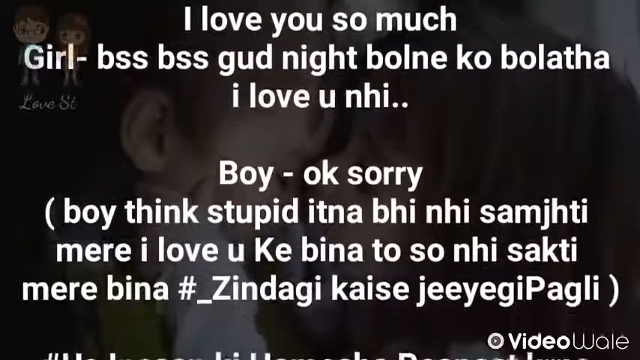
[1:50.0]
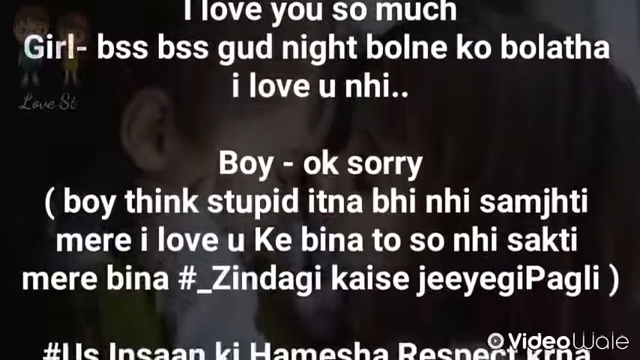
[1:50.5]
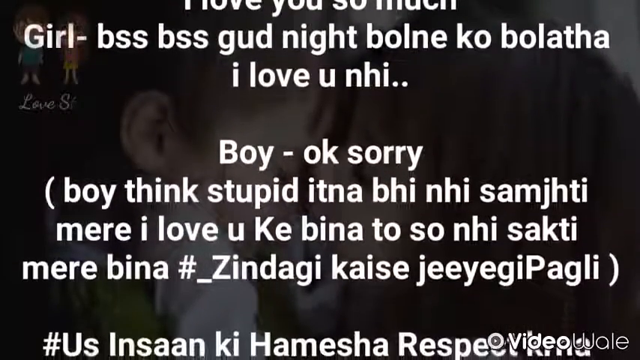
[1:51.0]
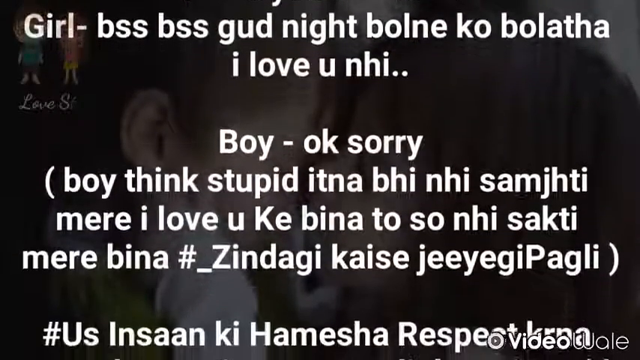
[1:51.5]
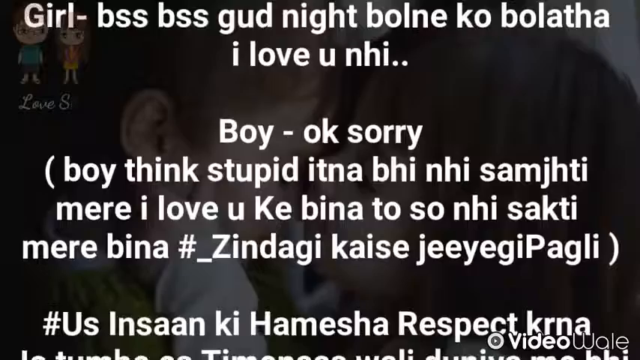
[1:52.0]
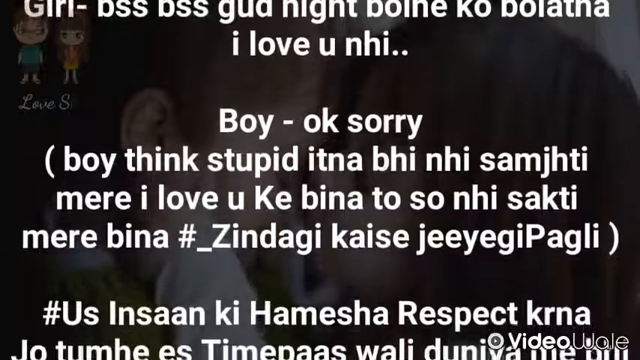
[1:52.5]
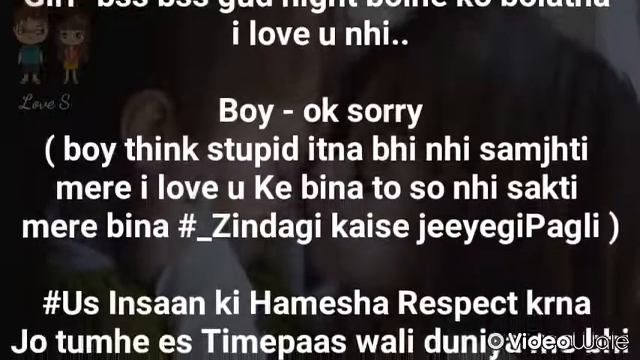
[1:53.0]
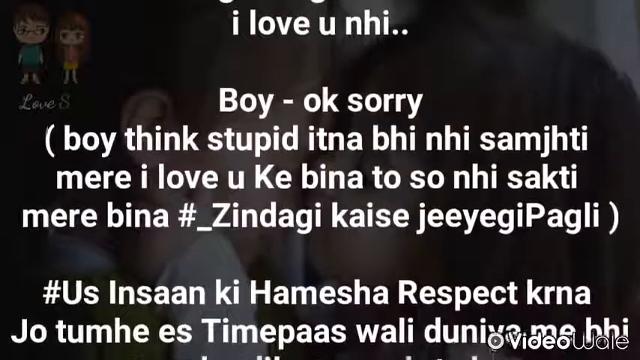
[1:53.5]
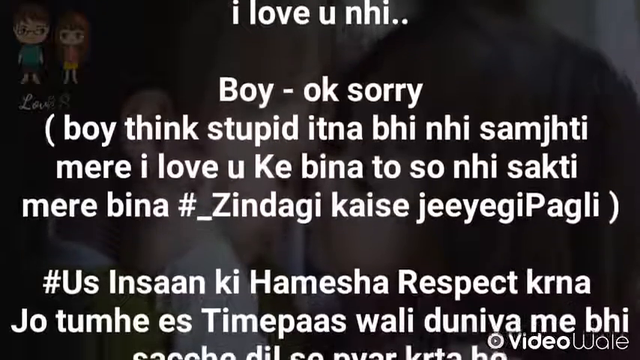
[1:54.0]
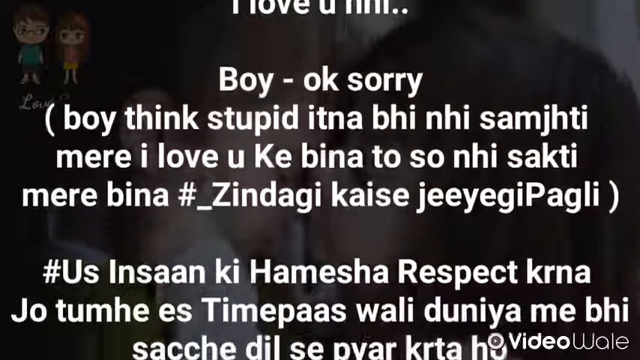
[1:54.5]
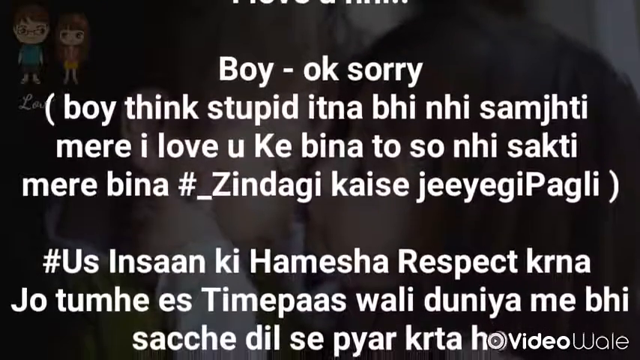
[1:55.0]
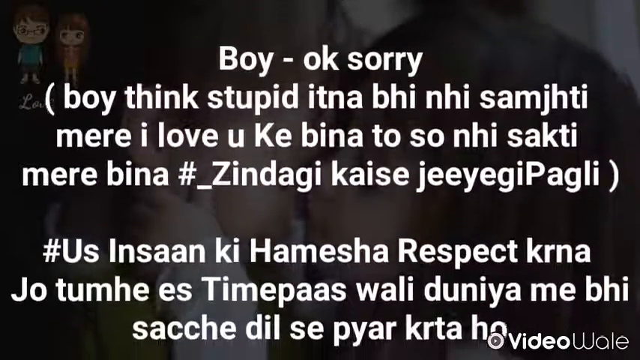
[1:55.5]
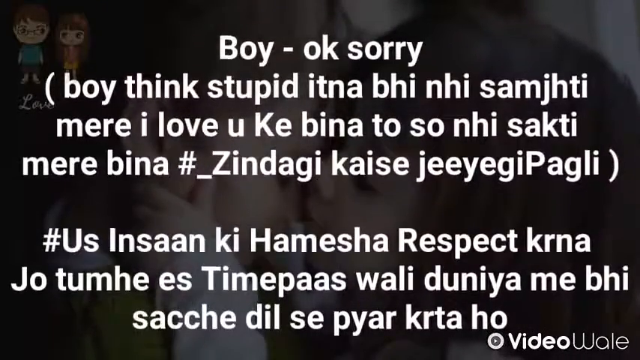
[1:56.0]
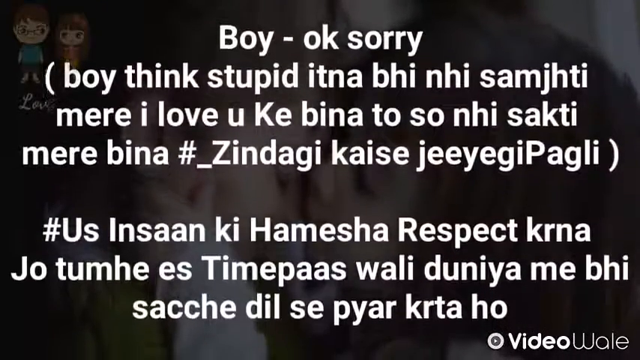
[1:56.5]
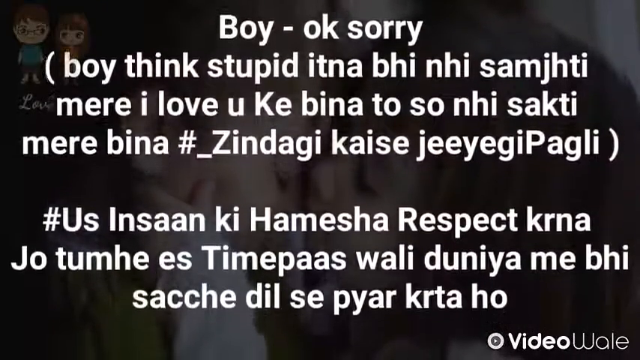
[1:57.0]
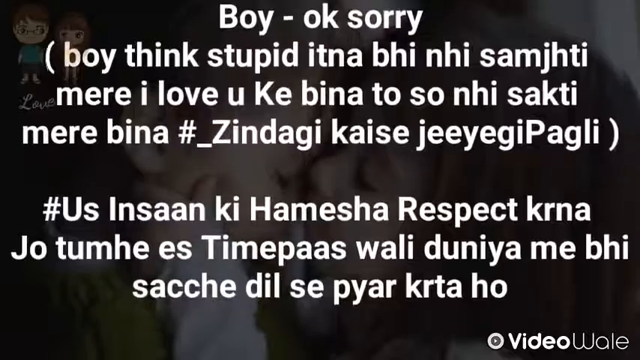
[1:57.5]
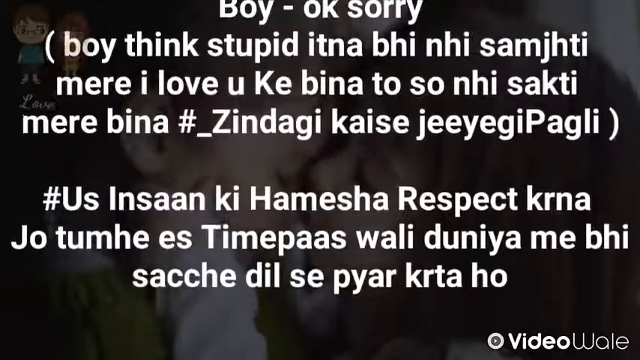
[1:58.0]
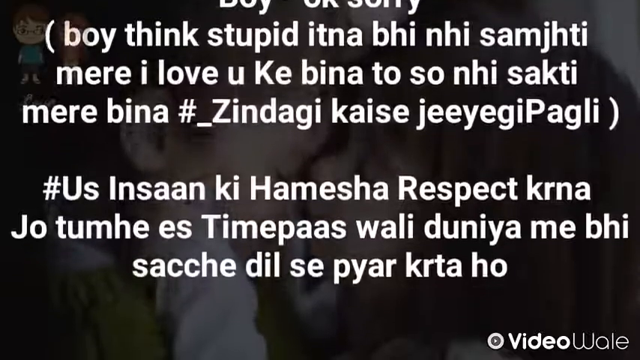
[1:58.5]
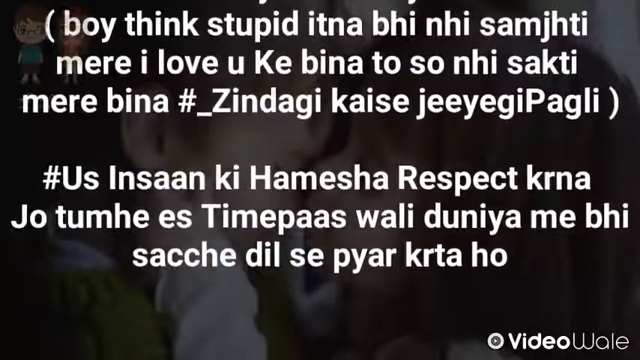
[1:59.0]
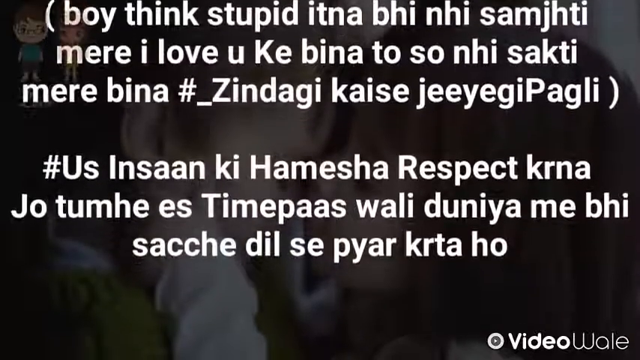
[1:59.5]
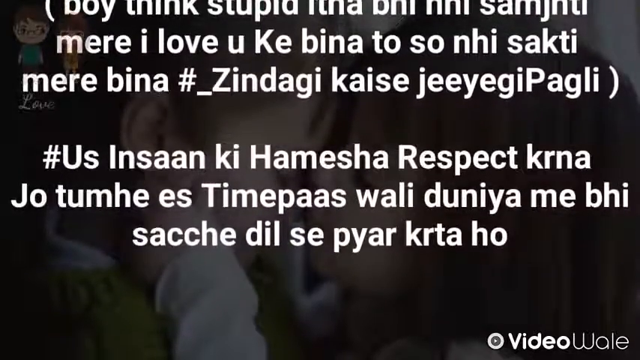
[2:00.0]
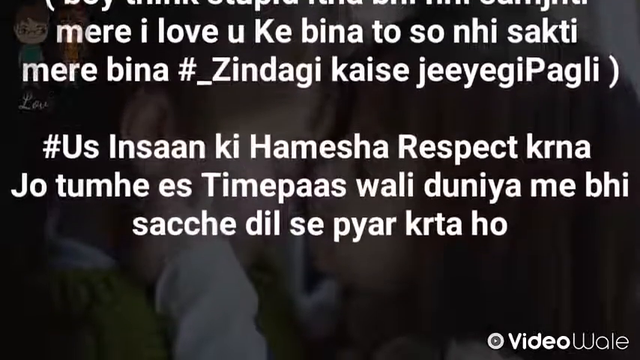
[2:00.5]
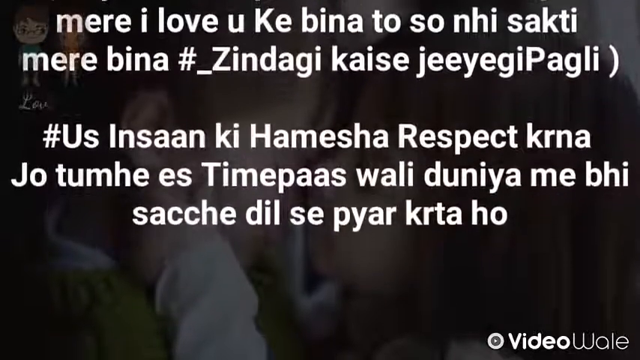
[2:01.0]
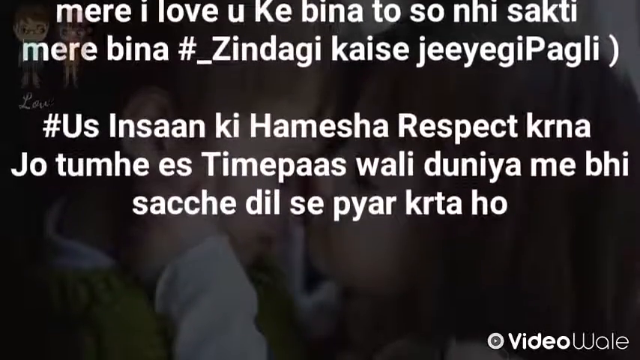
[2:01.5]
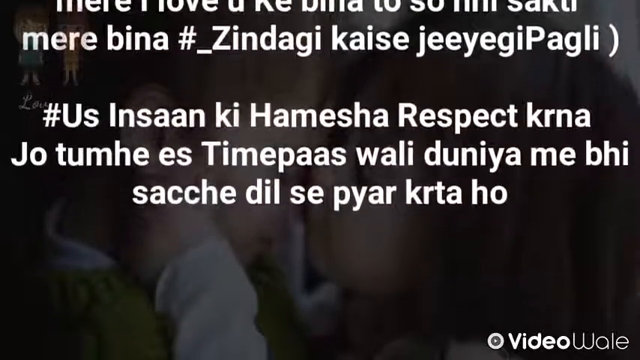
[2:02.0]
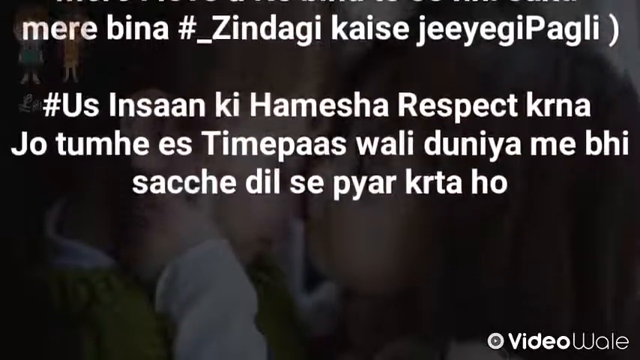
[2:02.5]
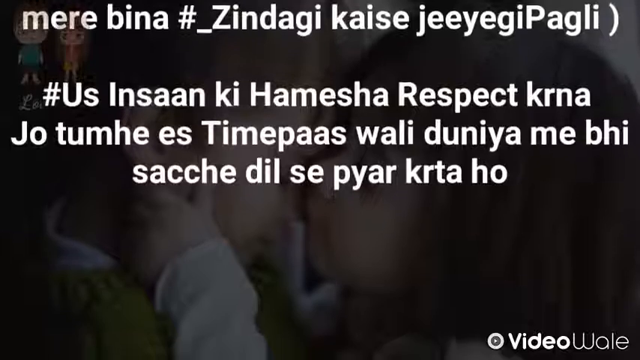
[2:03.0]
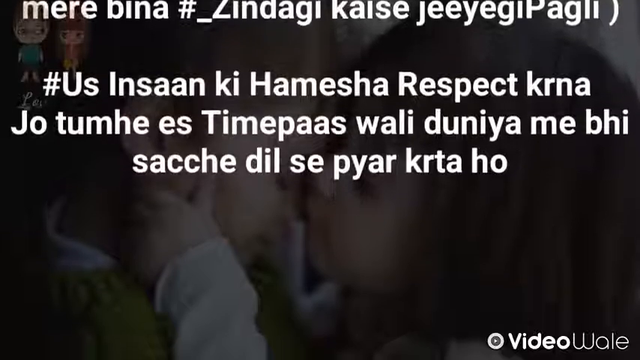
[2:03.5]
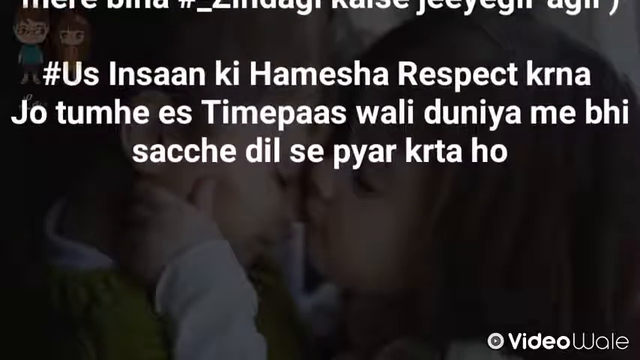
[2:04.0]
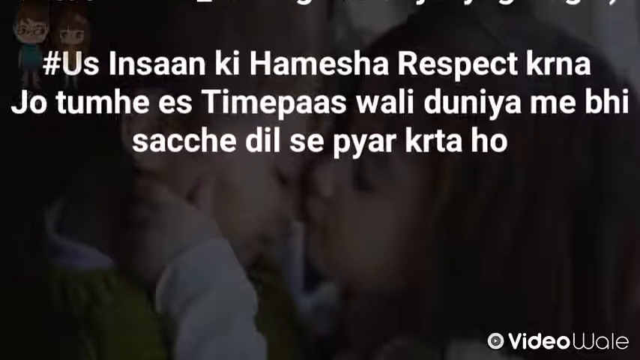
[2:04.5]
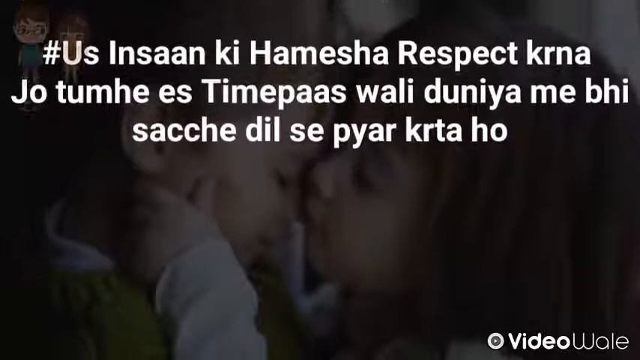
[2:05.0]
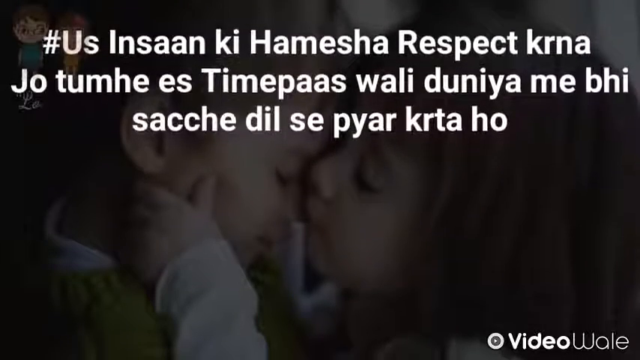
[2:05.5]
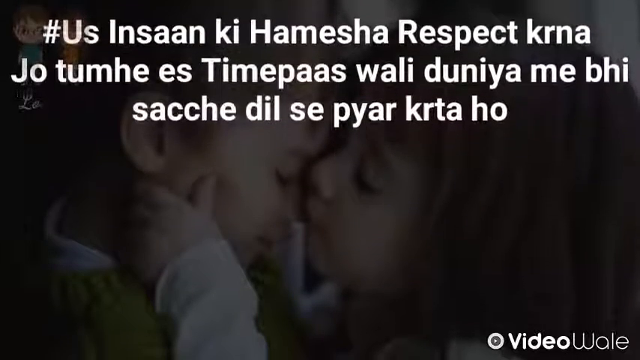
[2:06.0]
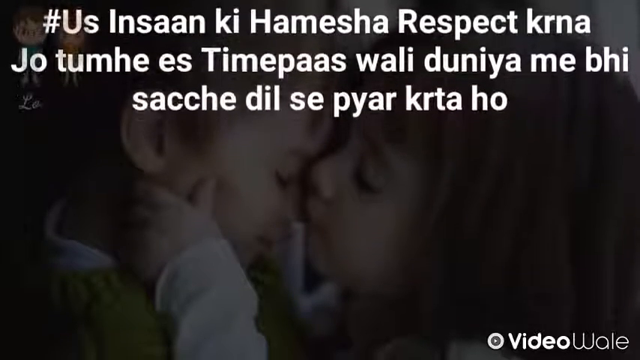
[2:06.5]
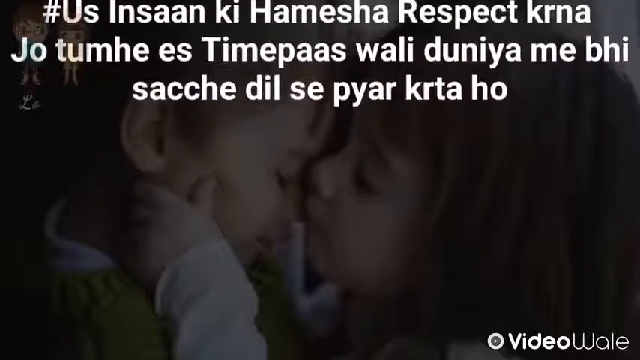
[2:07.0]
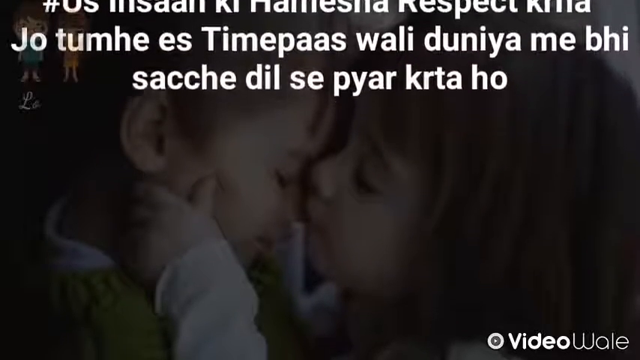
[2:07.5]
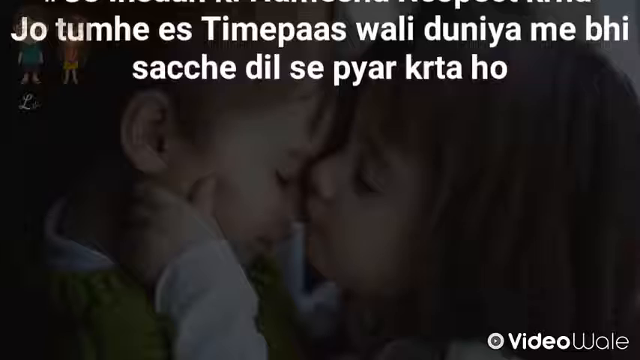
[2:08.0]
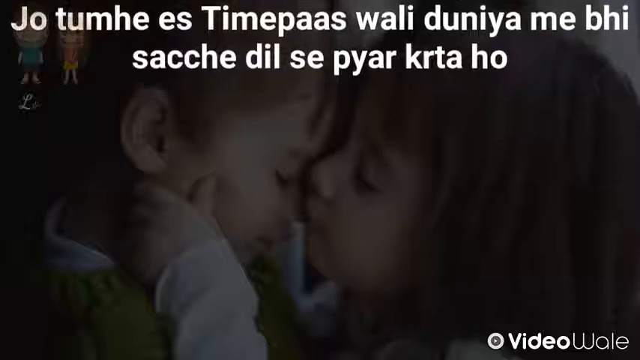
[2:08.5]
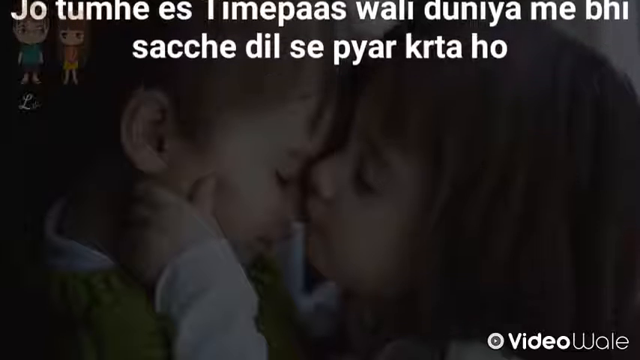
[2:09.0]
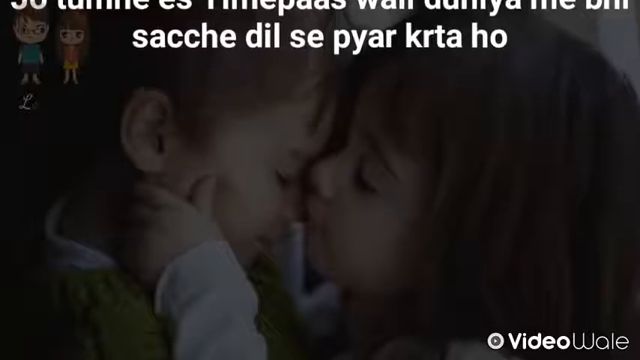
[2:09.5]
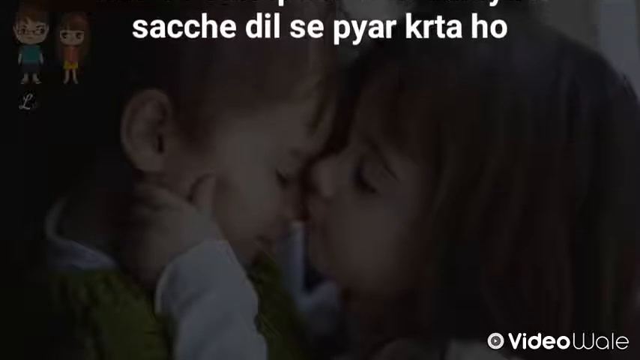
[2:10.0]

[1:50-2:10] The static background image stays the same: a very young girl on the right and a boy on the left. The girl has white skin, wears a white long-sleeved shirt, has dark brown hair and eyes closed, and her hand is on the side of the boy's face. The boy also has his eyes closed, white skin, and even shorter hair than the girl, more of a light brown. In the top left is a cartoon drawing of the boy and the girl. The drawn boy has white skin, glasses, brown hair, a blue shirt and dark blue shorts; the drawn girl has dark brown hair going down toward her back, an orange shirt and a yellow skirt. Bold white text in an unidentified foreign language moves upward on the screen until it eventually stops. The text mentions "boy" and "girl", indicating the two are talking to each other.